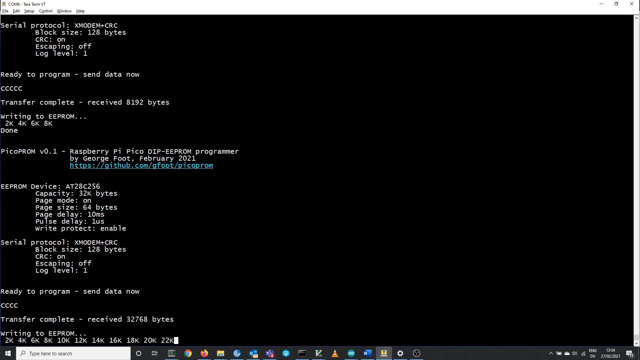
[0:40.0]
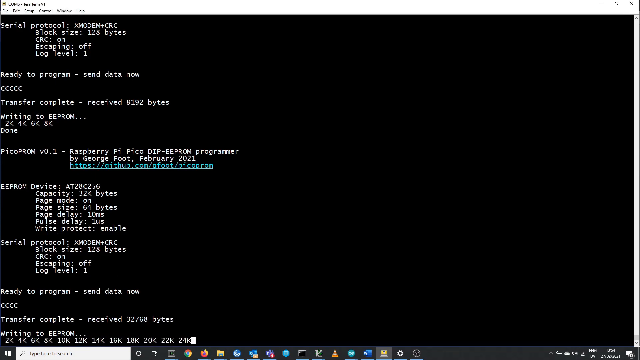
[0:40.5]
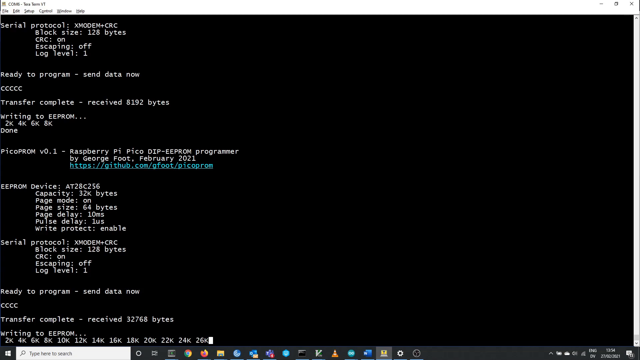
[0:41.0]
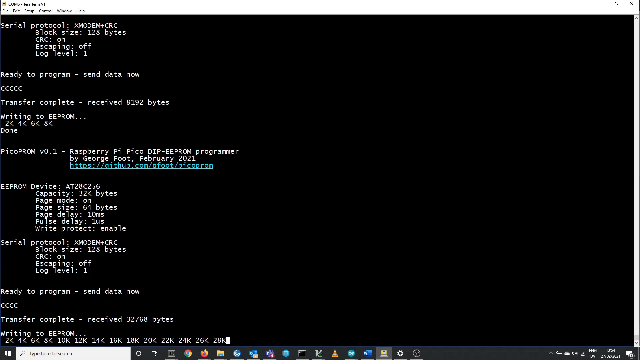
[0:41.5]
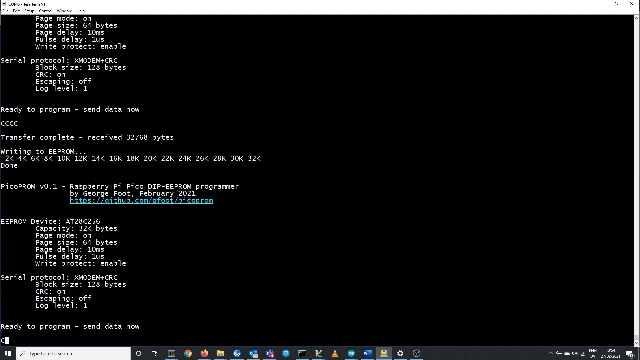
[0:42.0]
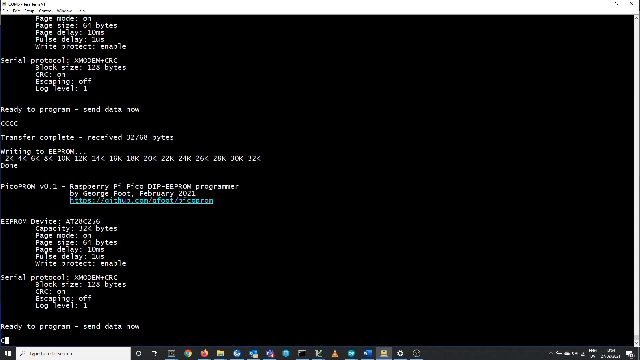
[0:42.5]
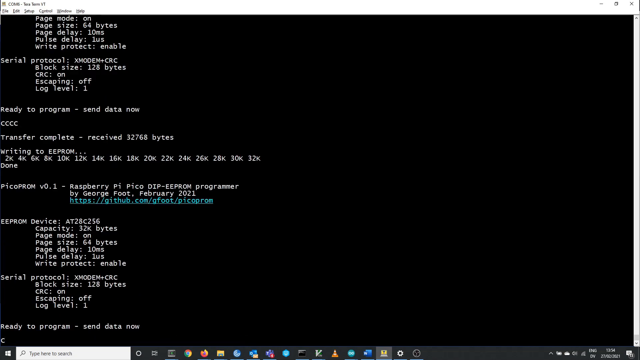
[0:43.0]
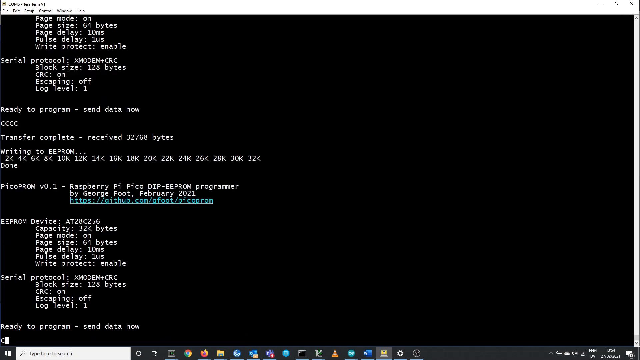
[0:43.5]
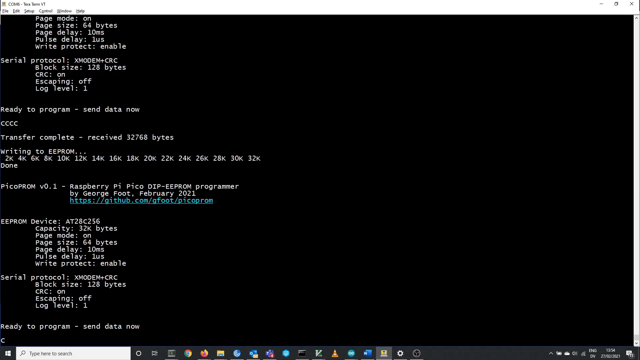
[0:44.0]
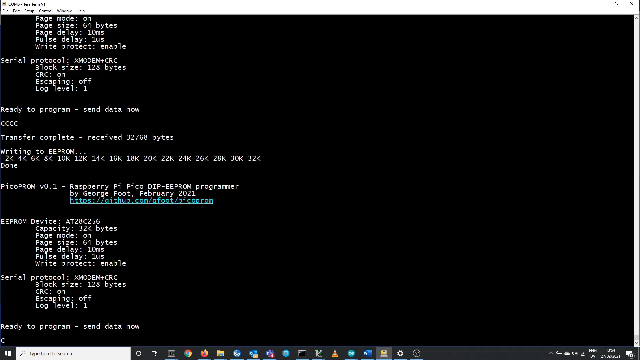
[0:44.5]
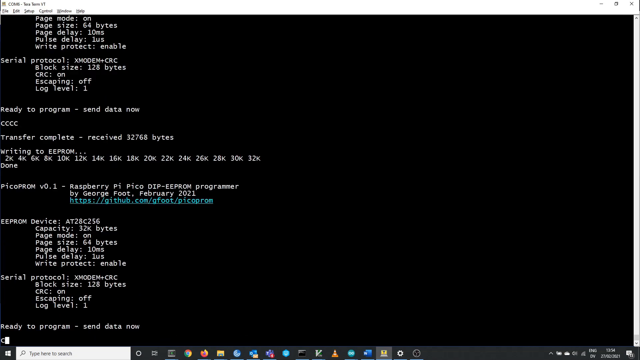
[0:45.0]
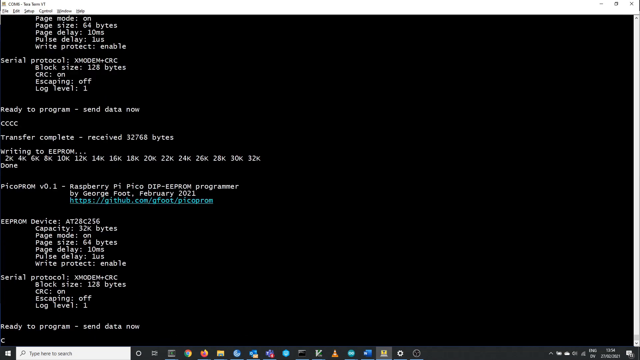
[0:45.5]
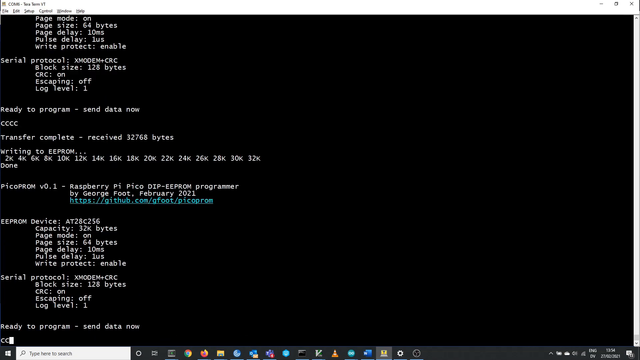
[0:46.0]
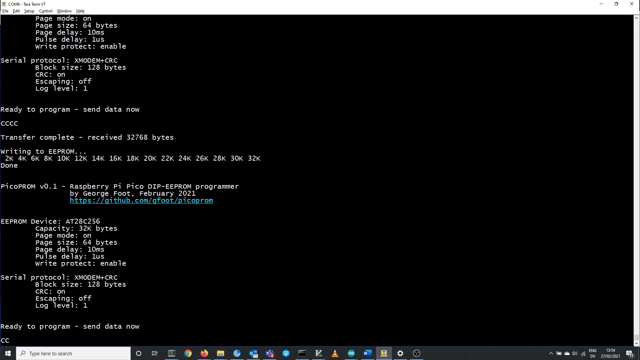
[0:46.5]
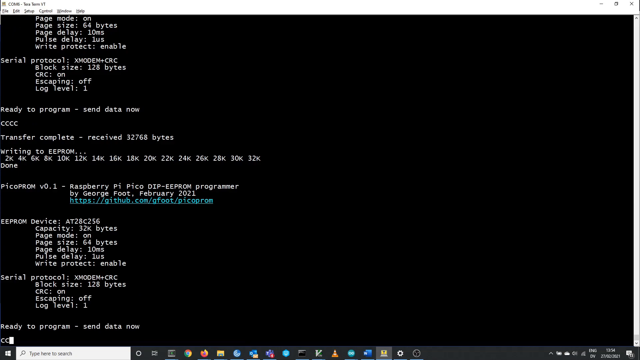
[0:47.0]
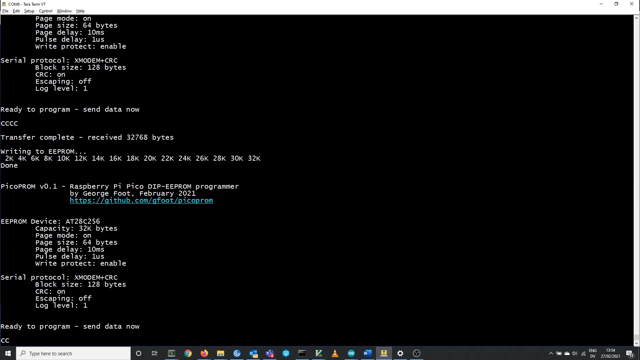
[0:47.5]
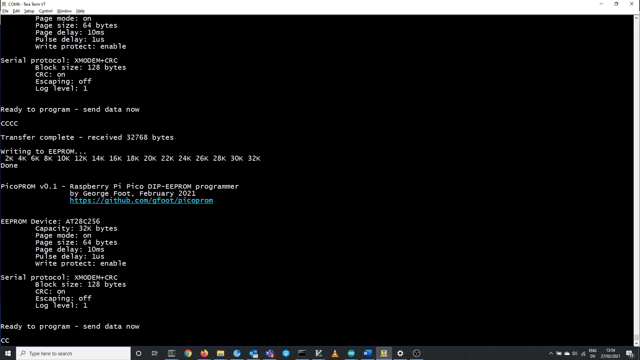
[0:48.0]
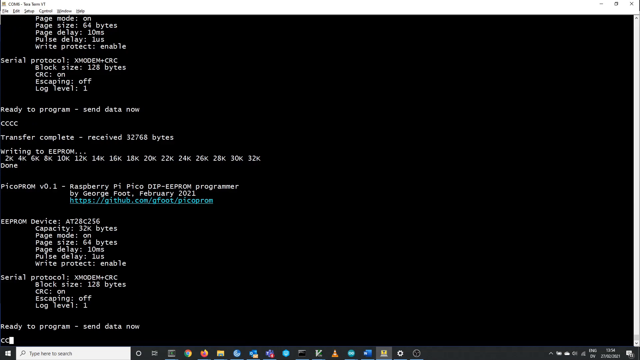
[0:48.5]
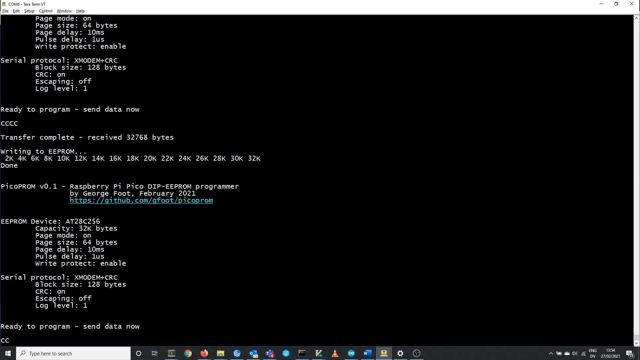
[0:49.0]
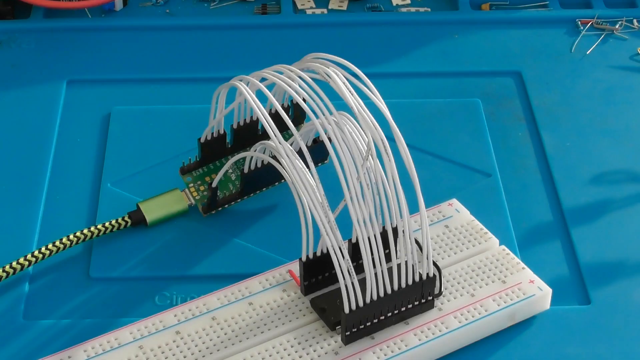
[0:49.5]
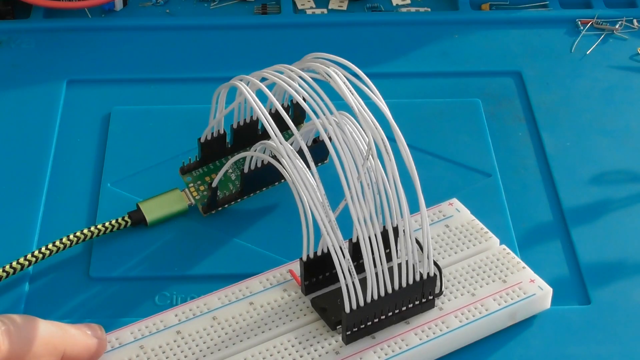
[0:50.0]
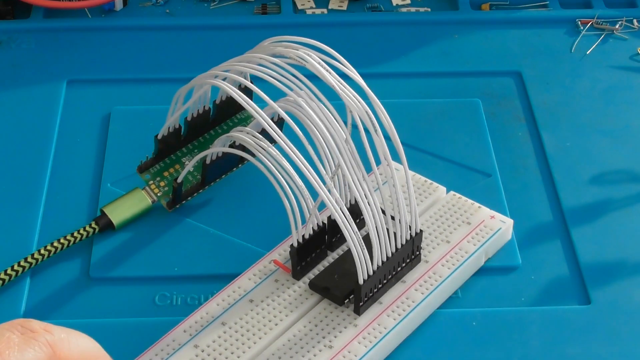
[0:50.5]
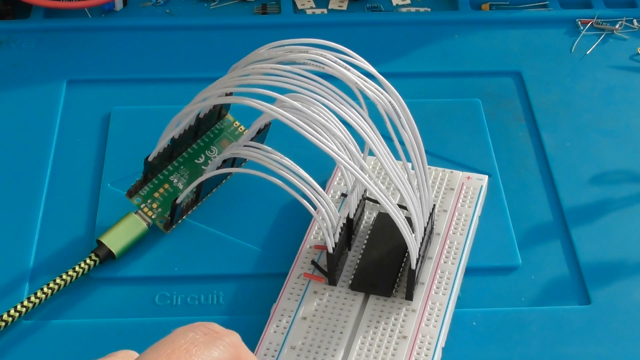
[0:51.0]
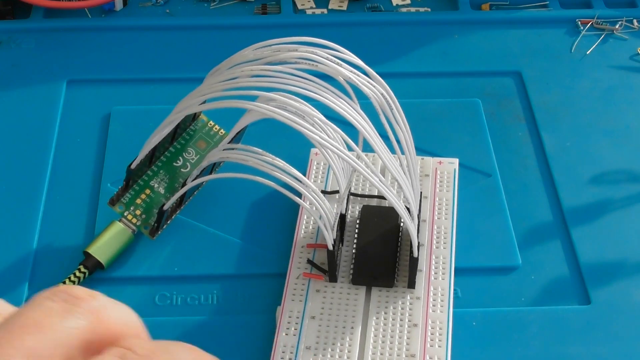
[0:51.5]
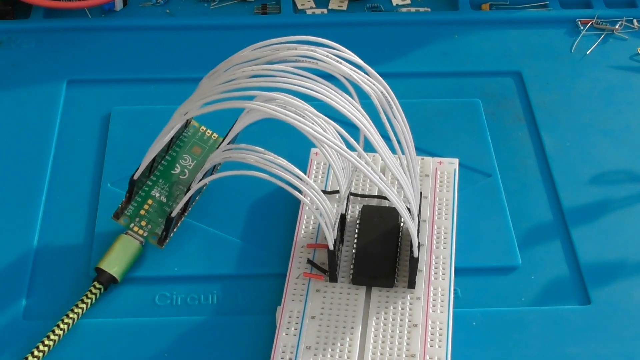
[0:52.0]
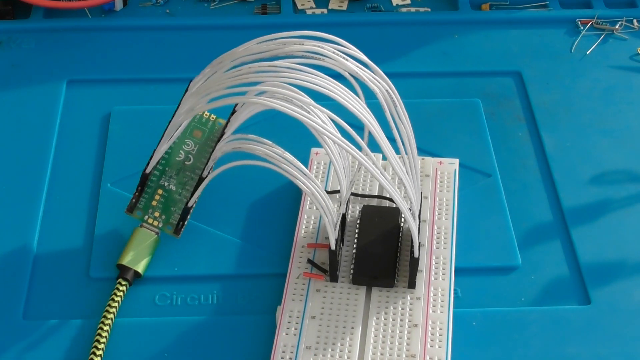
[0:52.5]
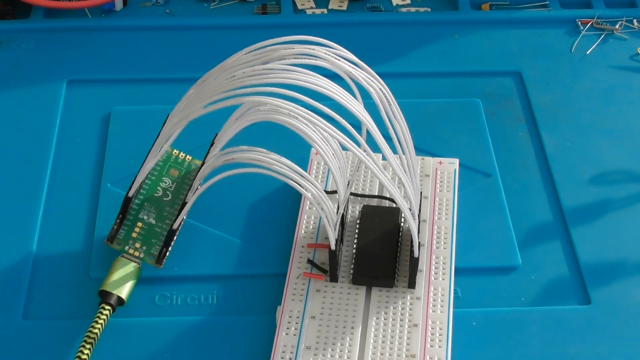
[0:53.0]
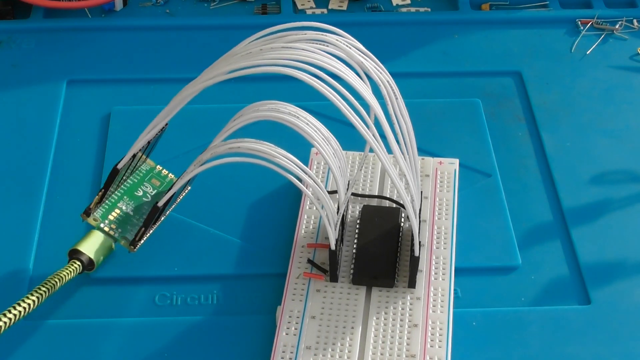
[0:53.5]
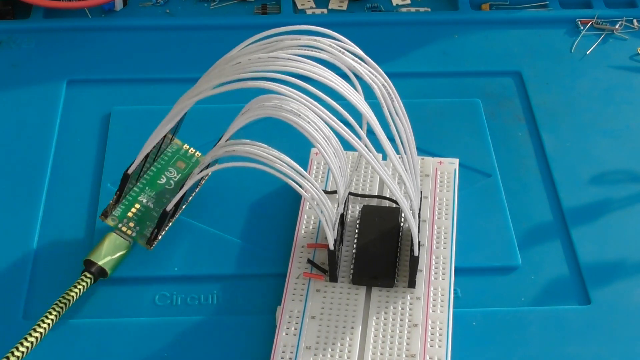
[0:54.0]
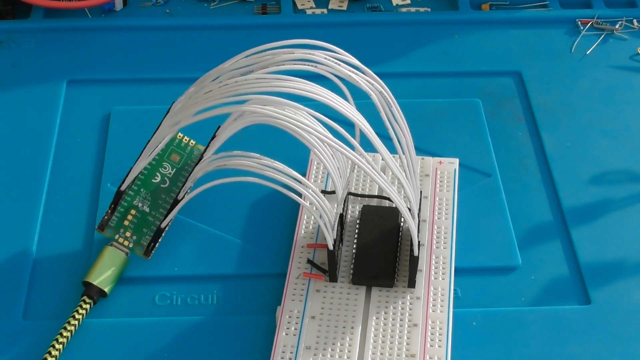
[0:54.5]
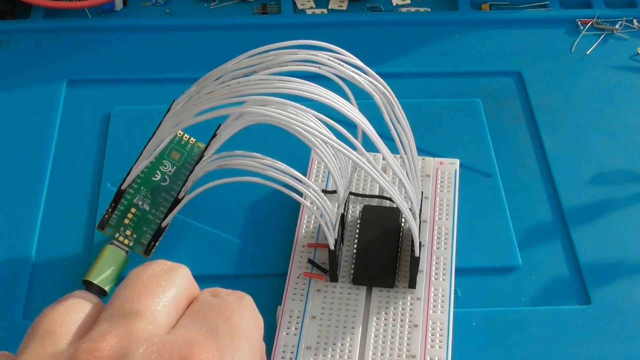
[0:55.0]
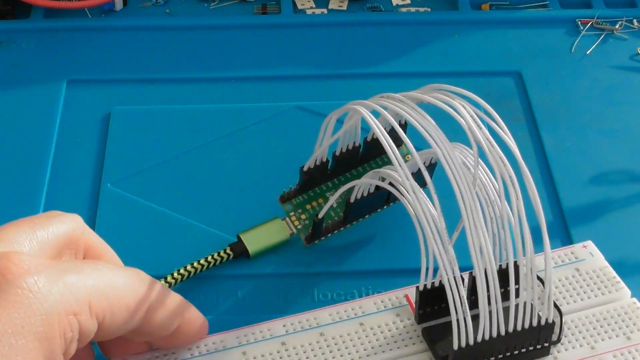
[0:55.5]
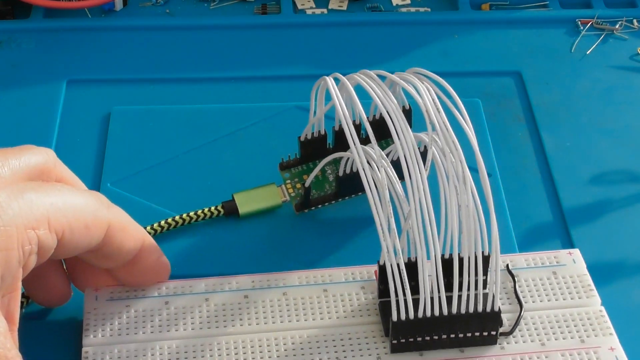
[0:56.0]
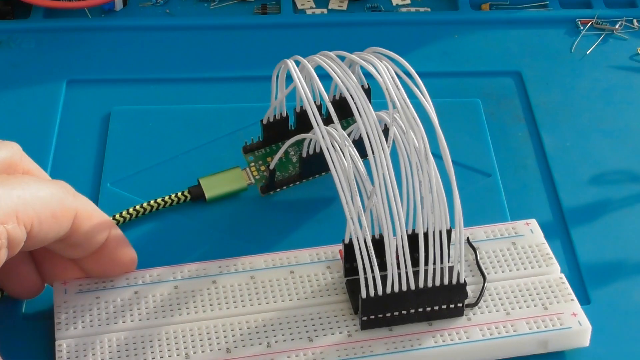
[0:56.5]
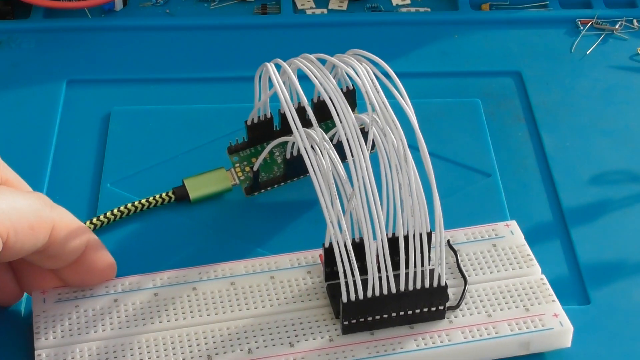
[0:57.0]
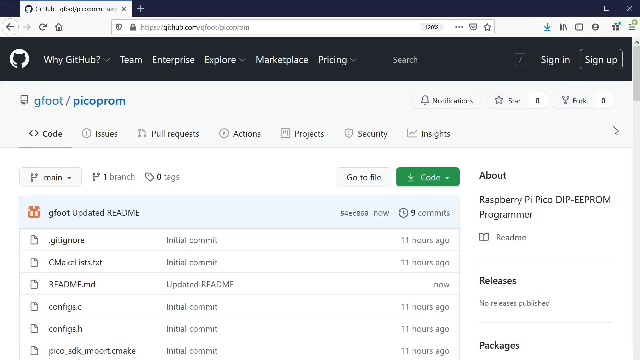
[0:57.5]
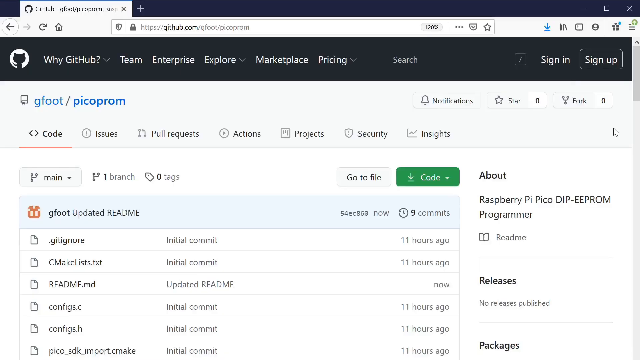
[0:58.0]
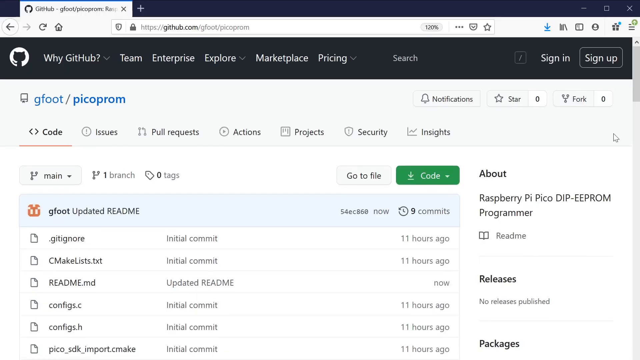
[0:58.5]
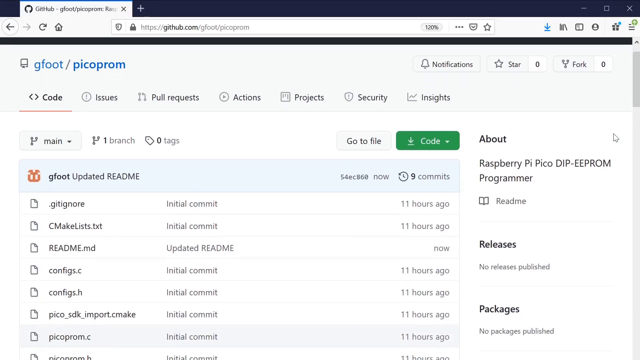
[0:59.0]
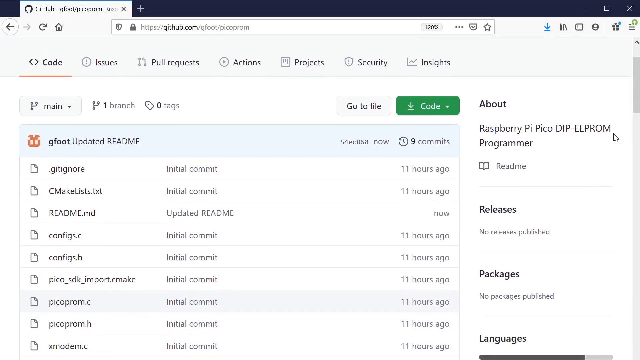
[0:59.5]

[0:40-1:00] The downloaded information appears on the screen as code, which is not very clear to read. Typing happens, possibly a search for something else. All the code is gathered in one place, and the work looks finished.